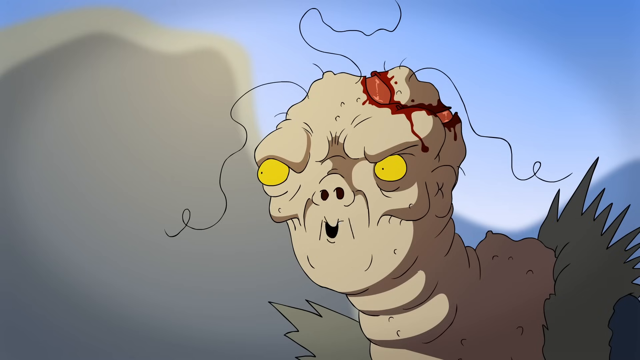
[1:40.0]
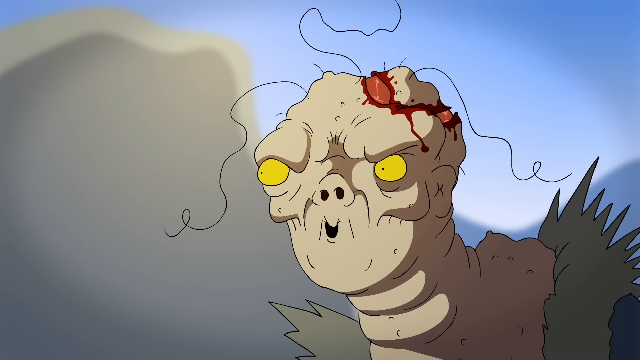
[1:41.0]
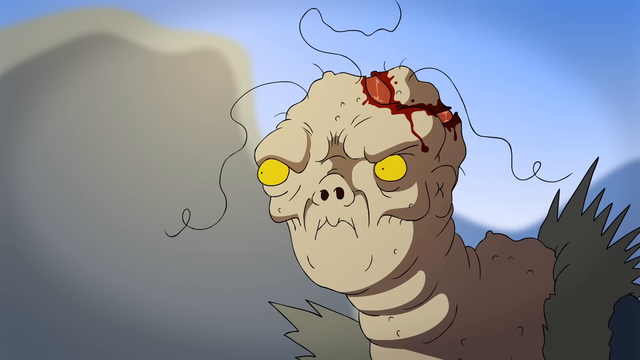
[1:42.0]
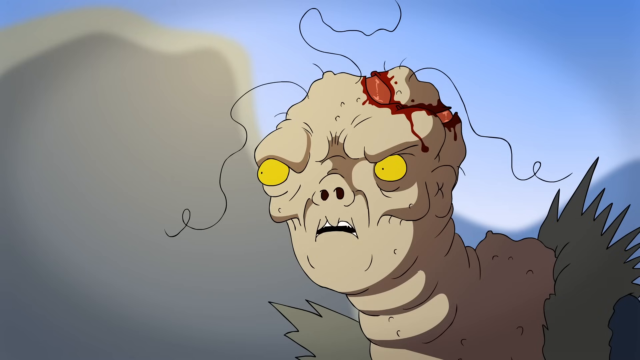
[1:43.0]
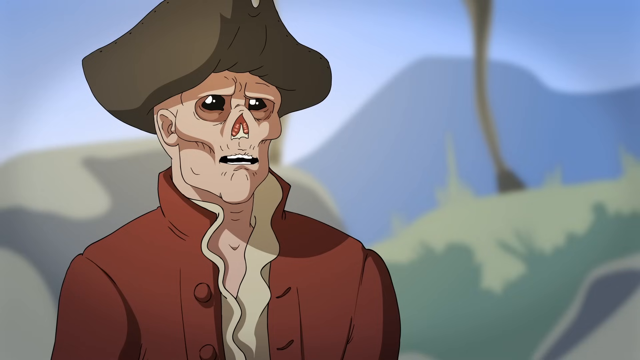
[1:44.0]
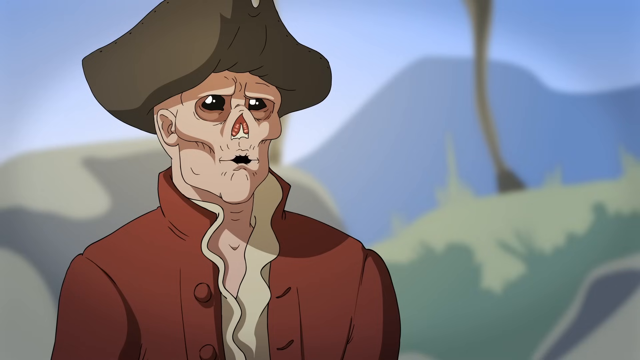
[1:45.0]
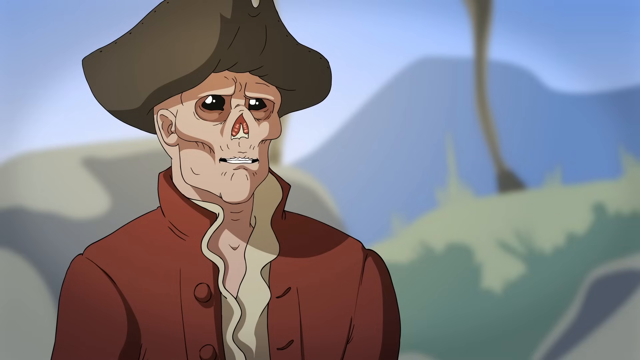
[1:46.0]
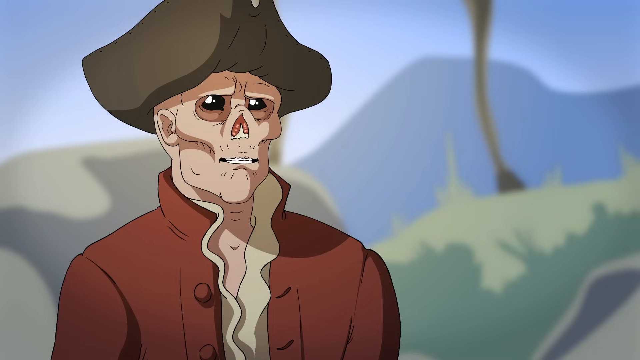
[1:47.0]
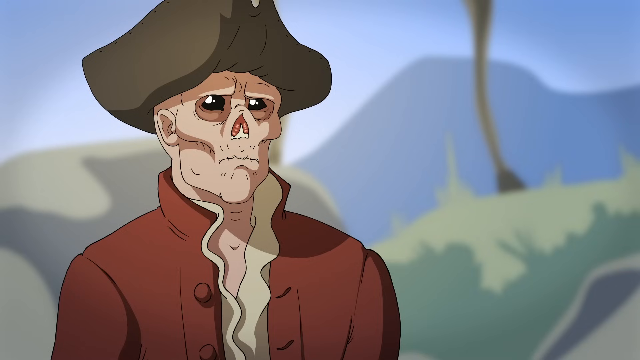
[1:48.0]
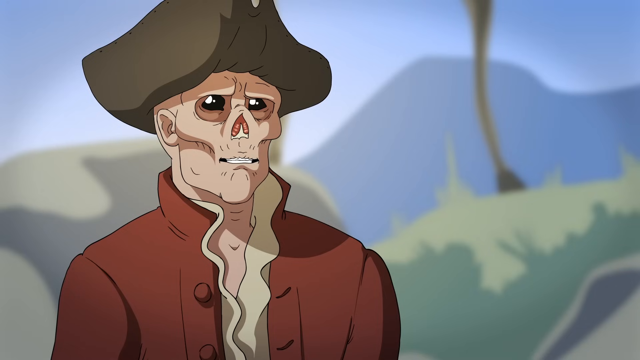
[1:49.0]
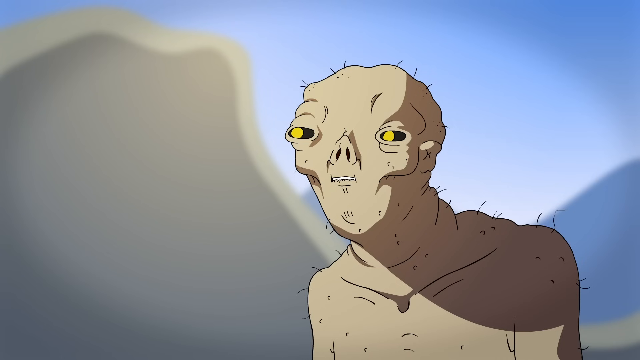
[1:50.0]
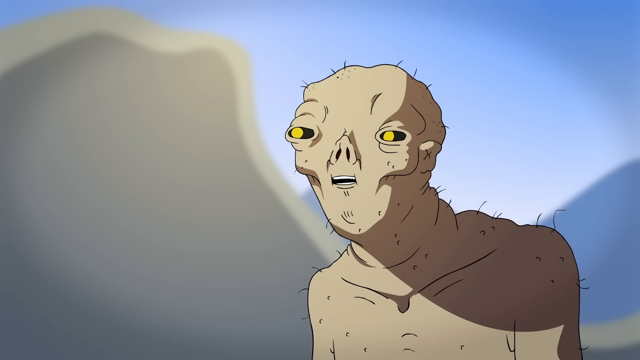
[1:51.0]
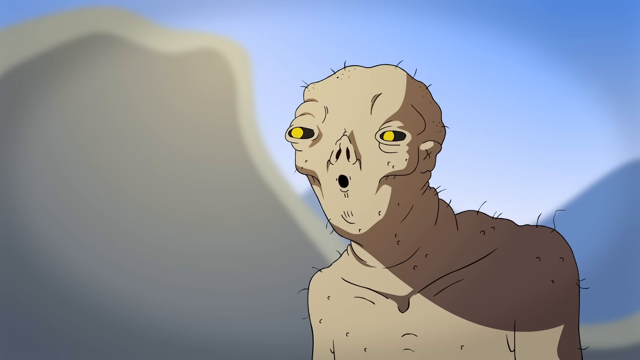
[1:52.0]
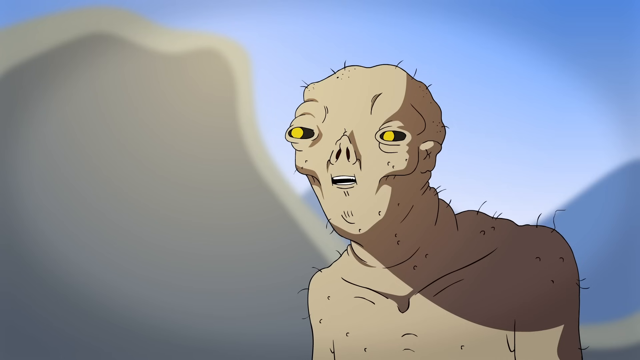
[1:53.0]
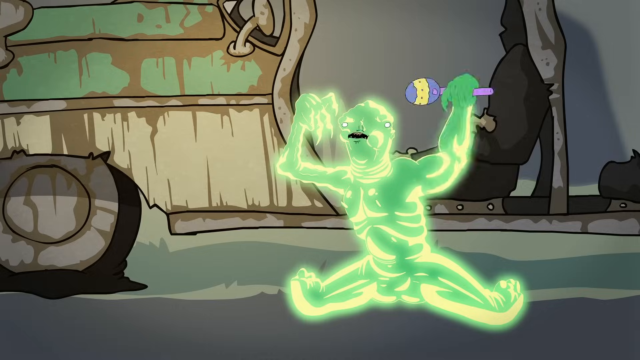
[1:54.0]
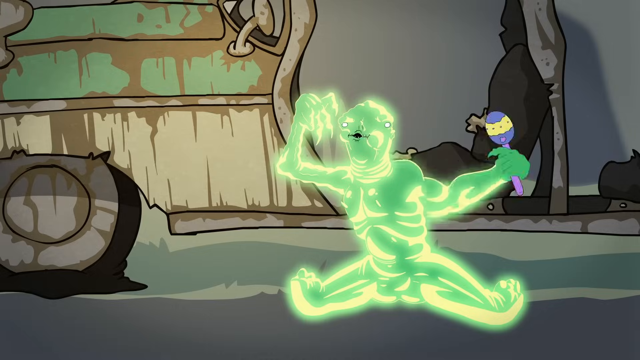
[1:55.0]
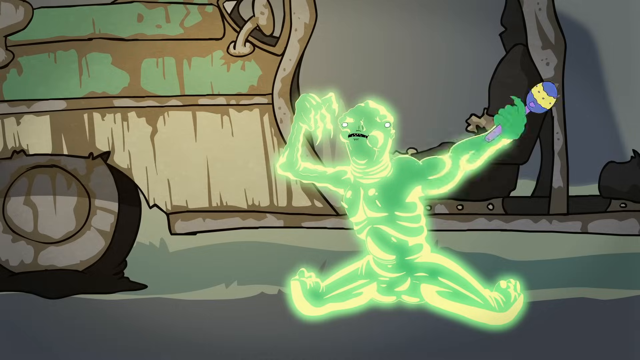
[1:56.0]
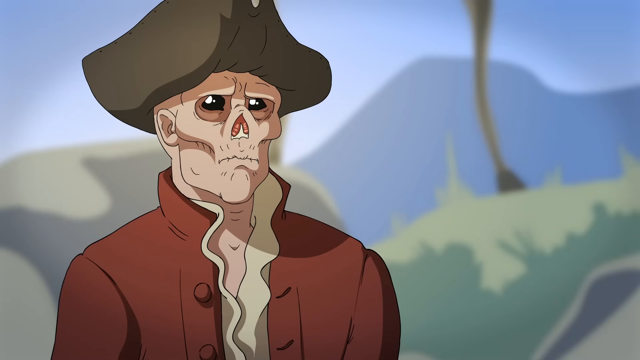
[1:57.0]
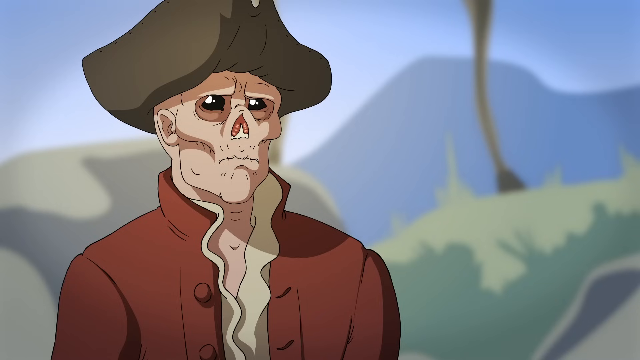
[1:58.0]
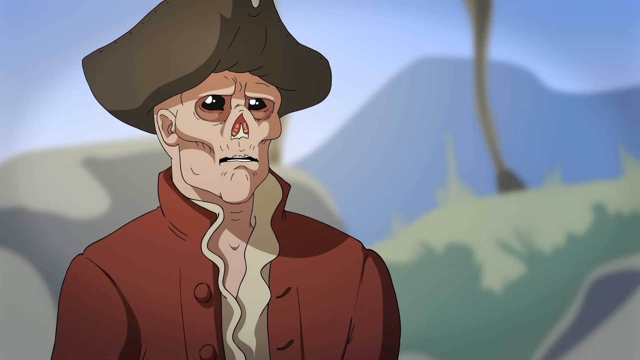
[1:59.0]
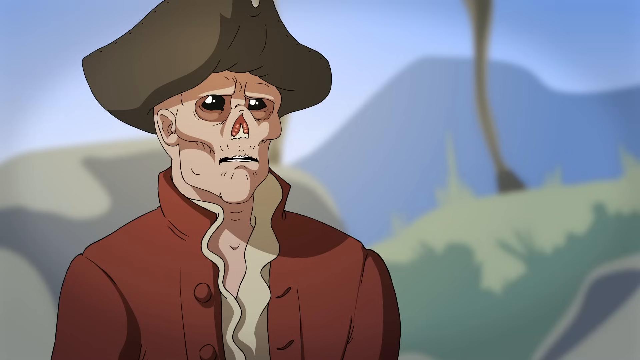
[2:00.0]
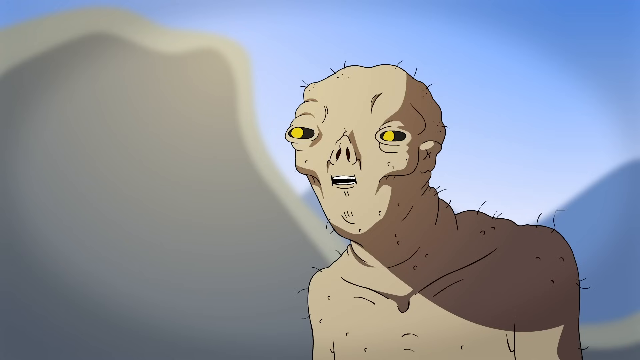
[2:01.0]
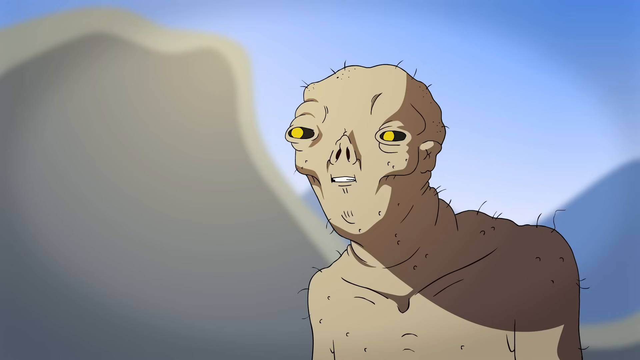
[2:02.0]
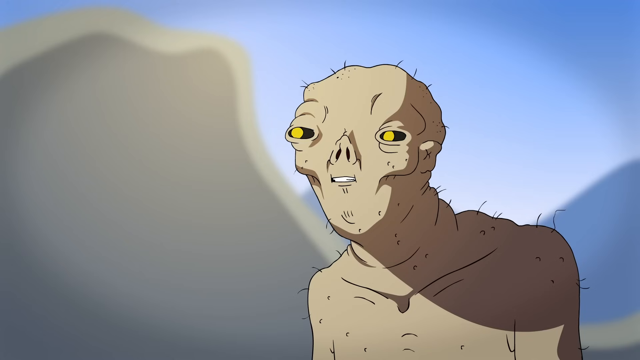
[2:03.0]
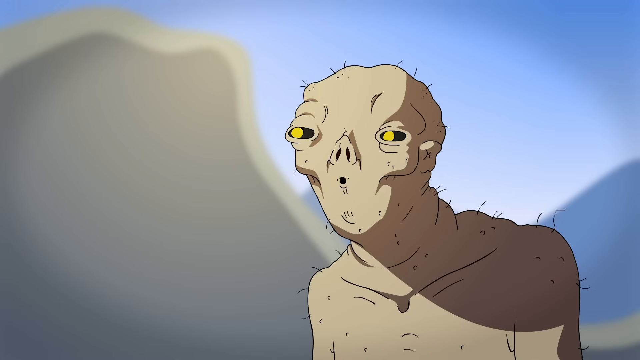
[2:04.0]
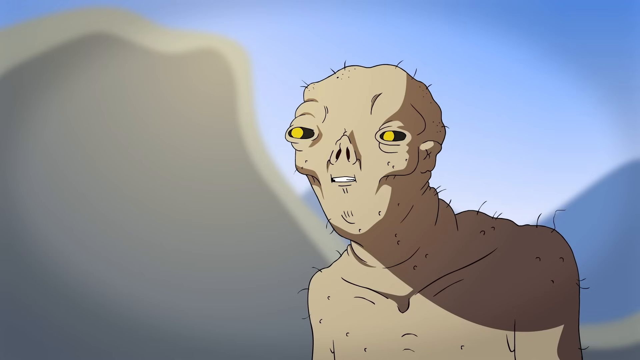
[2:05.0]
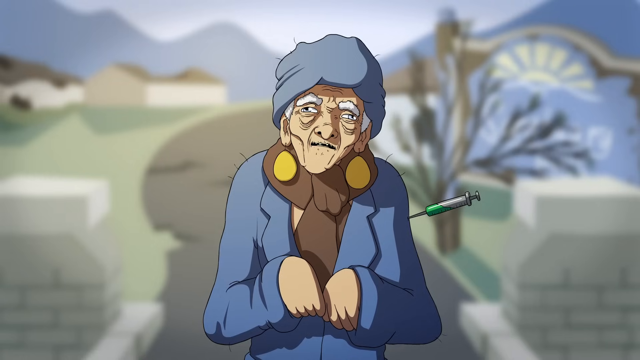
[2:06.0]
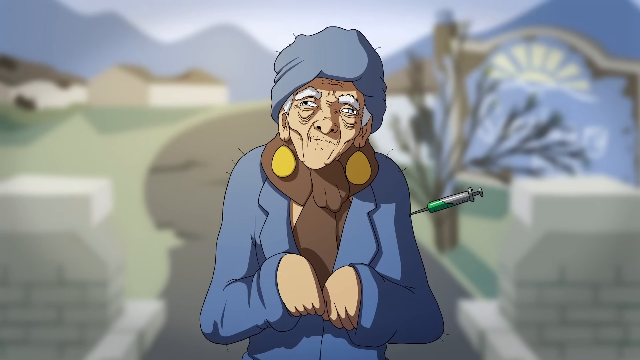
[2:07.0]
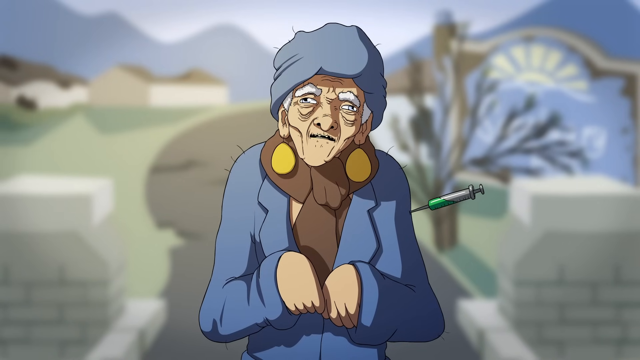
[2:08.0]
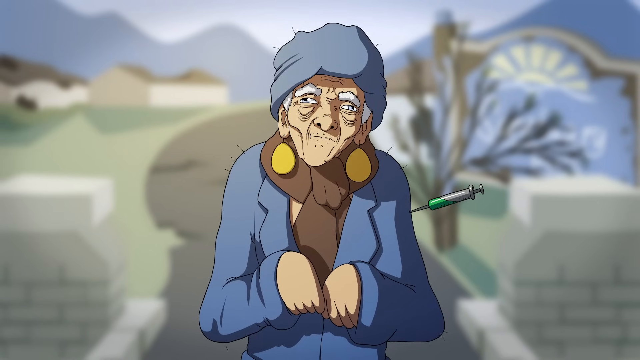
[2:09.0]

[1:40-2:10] The zombie woman in the dress is bleeding from the top right side of her head; there looks to be a big gash running from the top of her head down to the right, just above her ear. Three very long strands of hair come out of her head: one directly from the top, one from the left side and one from the right side. Her mouth moves as if she is speaking, and she looks to her right, presumably talking to the pirate man. One of the naked zombies talks, his nose still missing and his mouth moving as he speaks. A brief glimpse shows the glowing green creature without legs below the knees sitting on the ground, holding a rattle in his left hand and waving it back and forth.